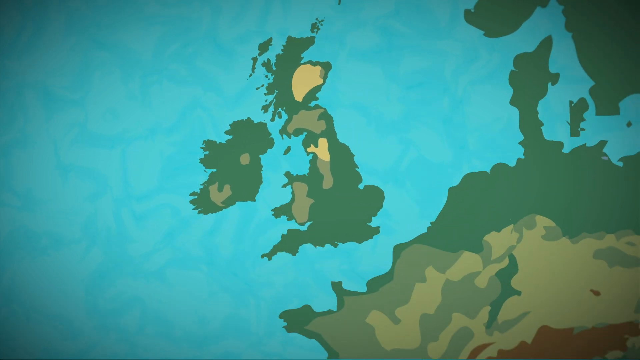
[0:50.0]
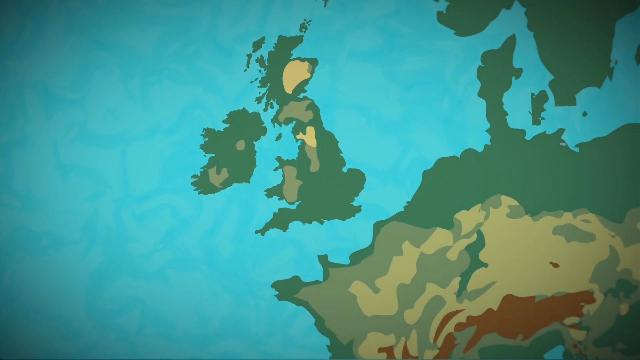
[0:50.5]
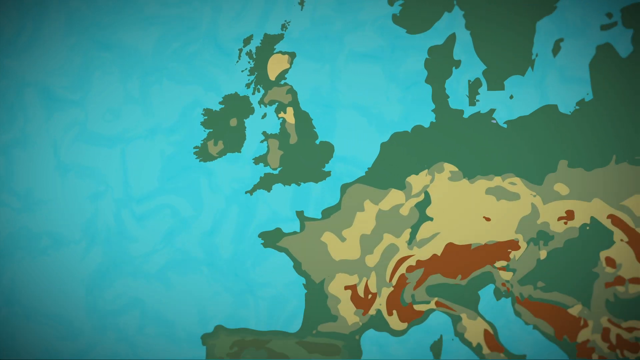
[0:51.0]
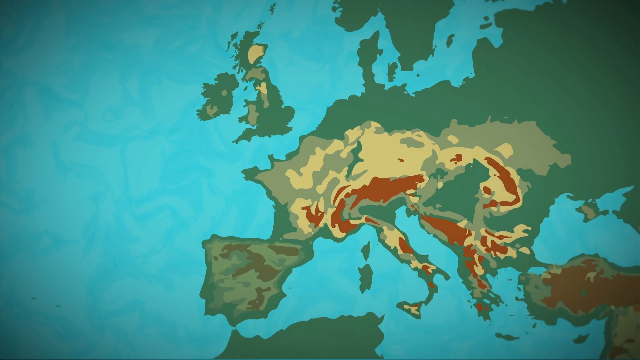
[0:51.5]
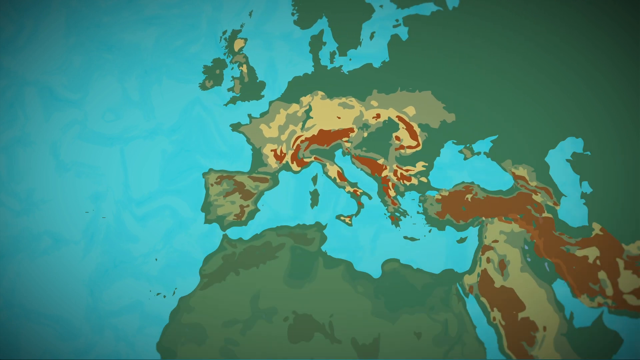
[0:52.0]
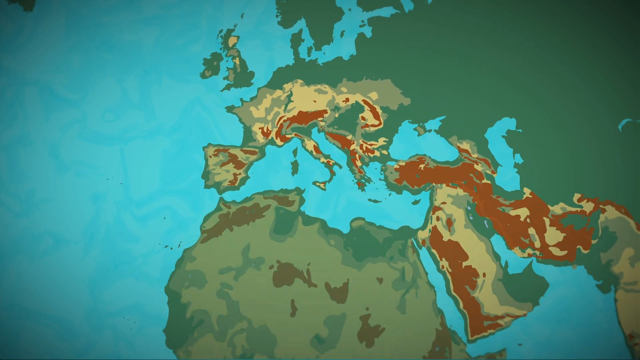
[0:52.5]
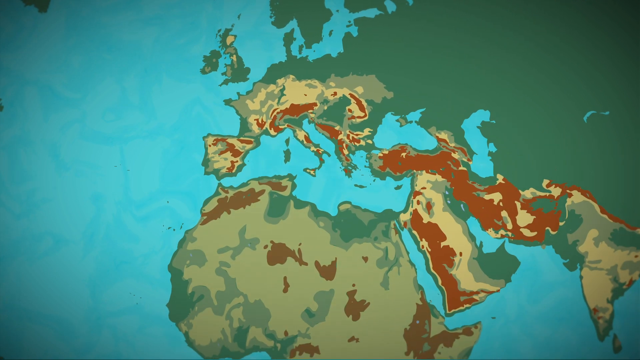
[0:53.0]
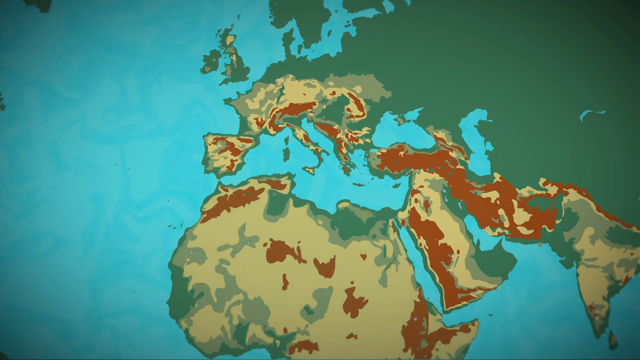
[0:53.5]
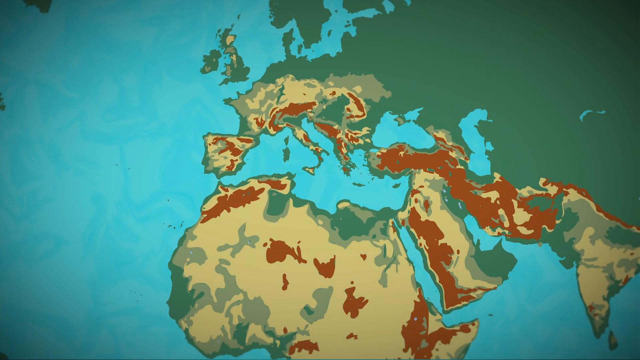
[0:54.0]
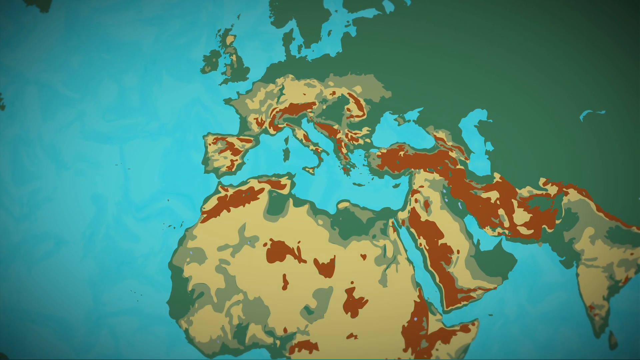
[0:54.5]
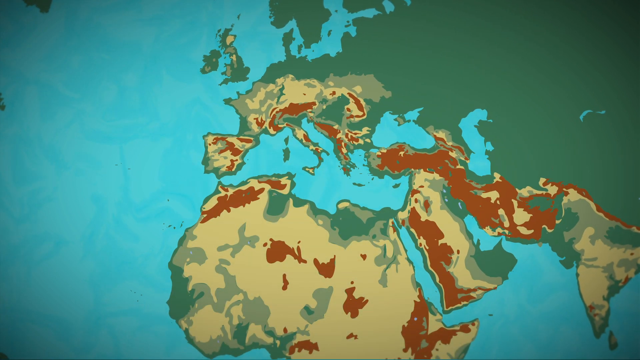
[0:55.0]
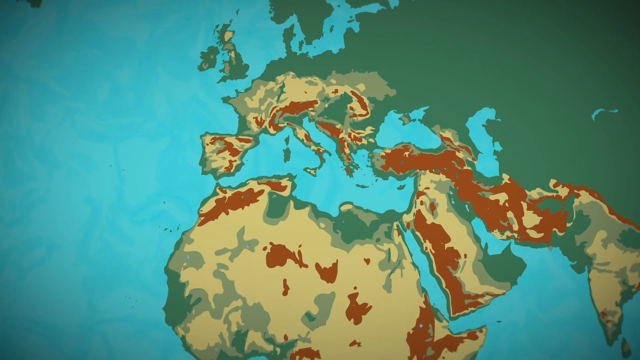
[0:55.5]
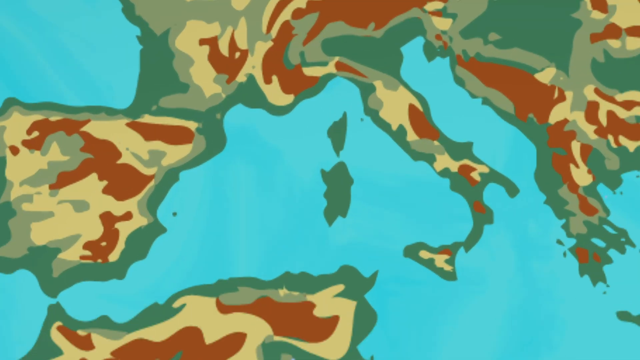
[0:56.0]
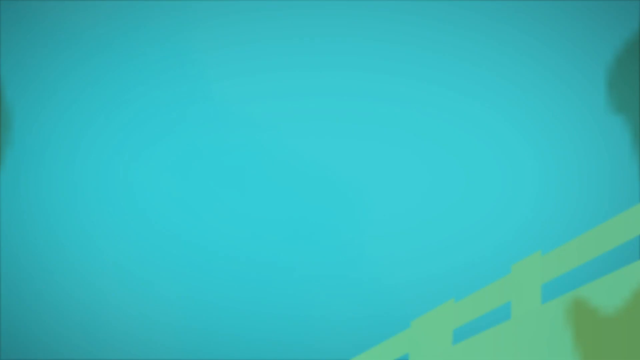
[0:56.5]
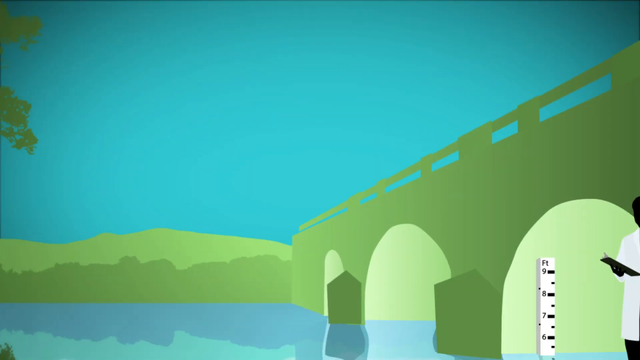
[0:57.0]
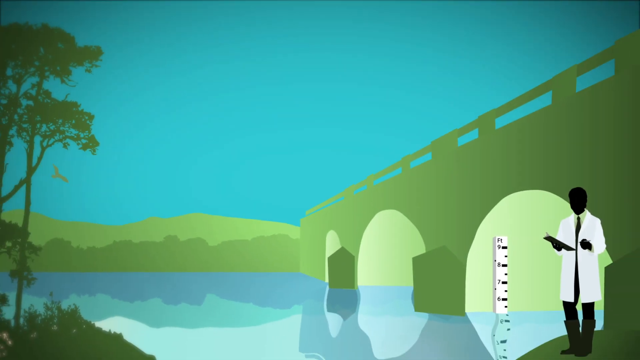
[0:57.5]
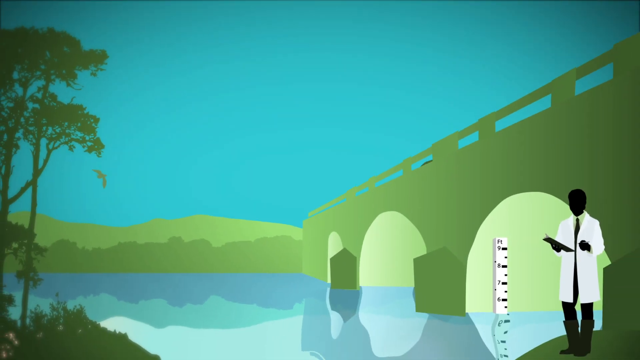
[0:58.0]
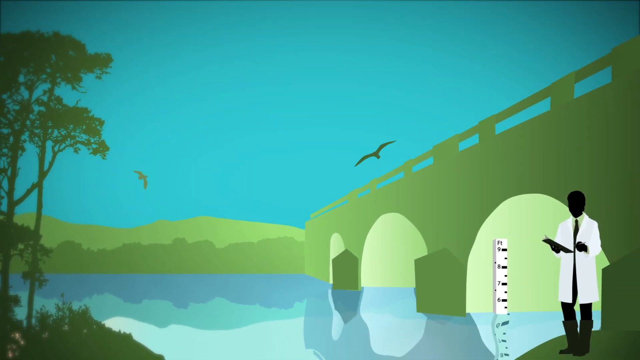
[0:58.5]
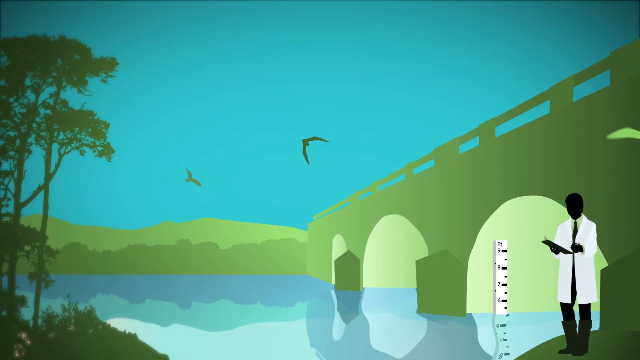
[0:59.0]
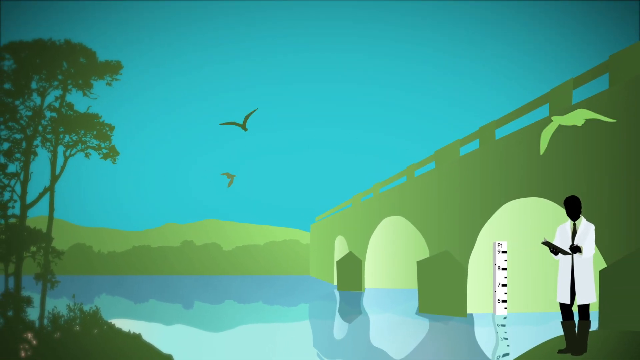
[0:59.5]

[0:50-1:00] The view starts focused on the cartoon map of the UK, which has lighter yellow and darker yellow spots on it. The camera seems to pull back until all of Europe, the Middle East and North Africa are visible on the map. Yellow and red shapes appear across these areas; some areas have a lot of yellow and some a lot of red, possibly relating to water. Individual countries are not called out, but the general shape of the land is visible. Africa seems to have a lot of yellow and a little red, Europe has a mix, with some yellow and red a little further south, the Middle East is roughly half red and half yellow, and India, on the far right, is mostly yellow.